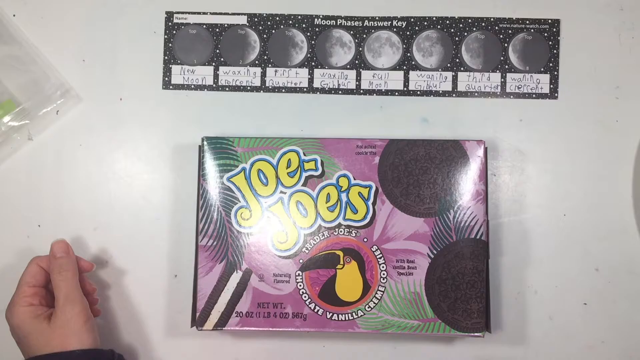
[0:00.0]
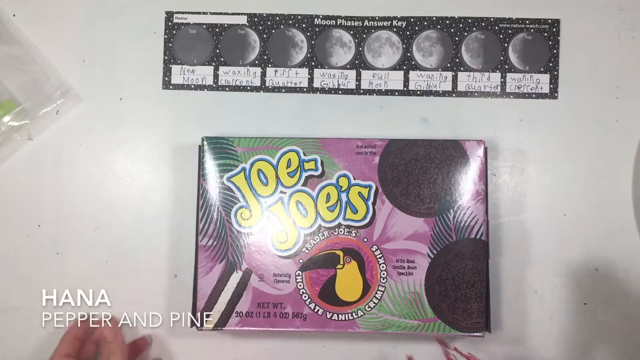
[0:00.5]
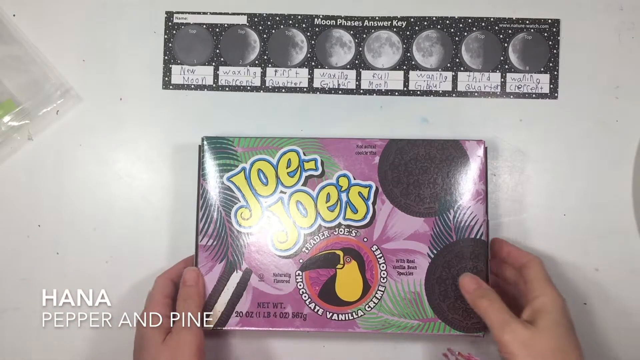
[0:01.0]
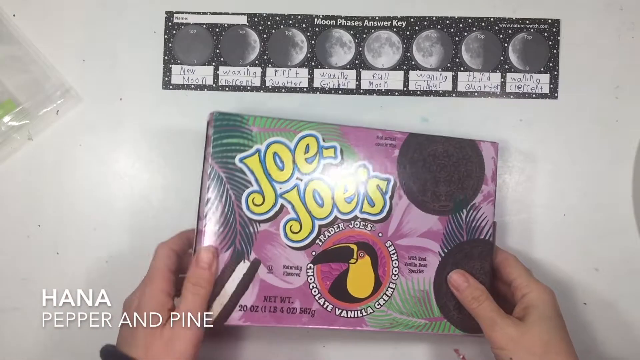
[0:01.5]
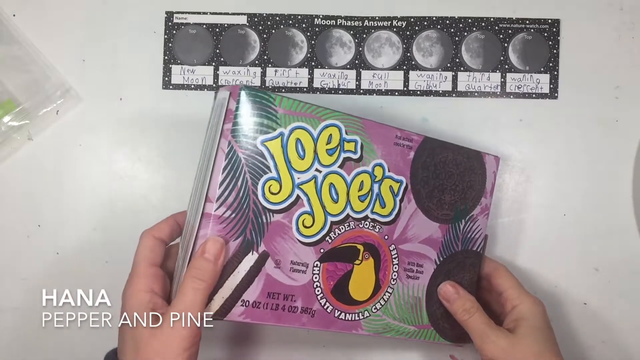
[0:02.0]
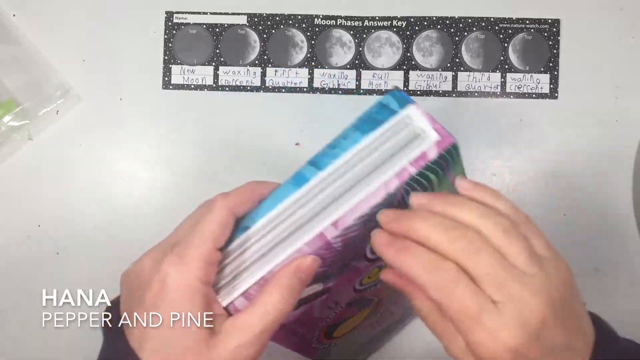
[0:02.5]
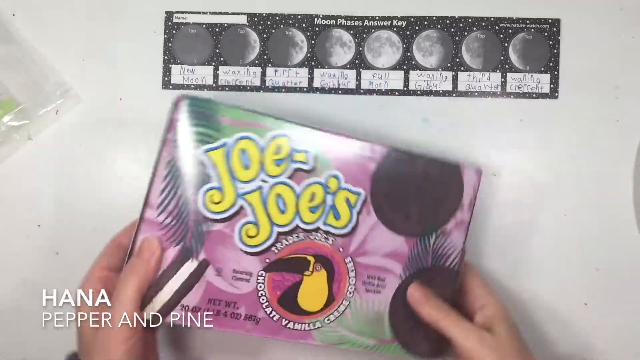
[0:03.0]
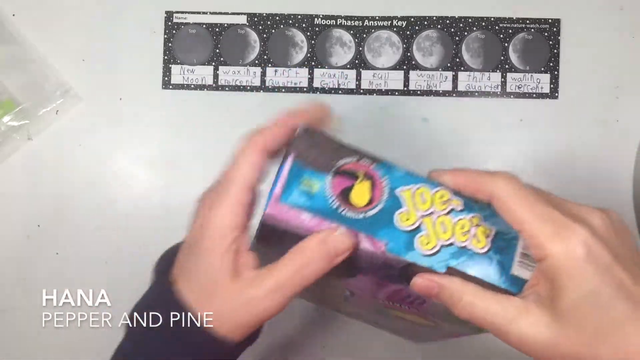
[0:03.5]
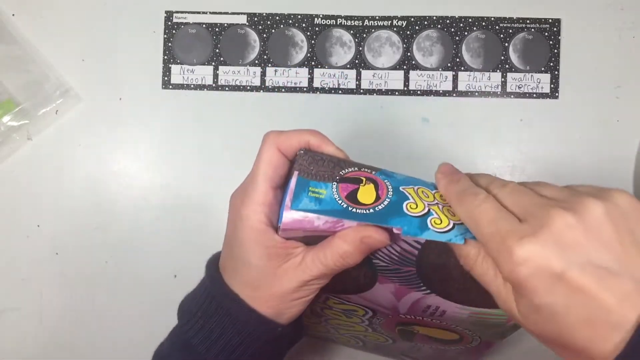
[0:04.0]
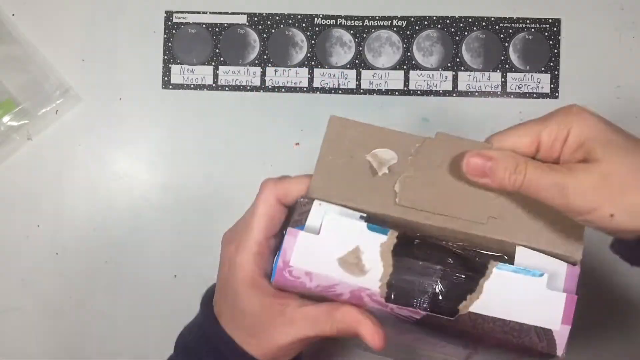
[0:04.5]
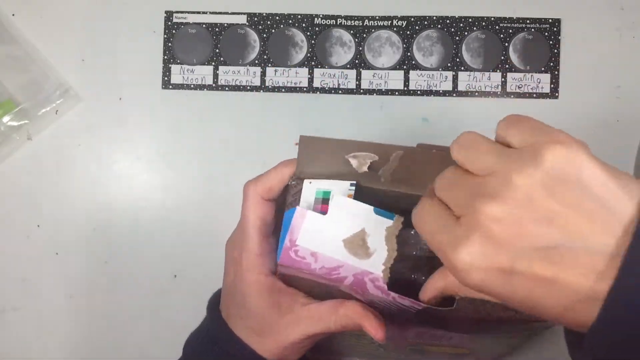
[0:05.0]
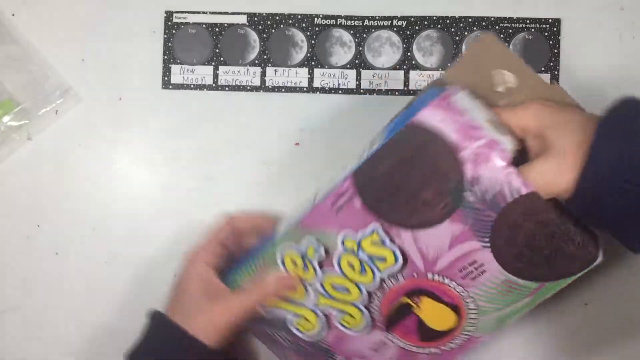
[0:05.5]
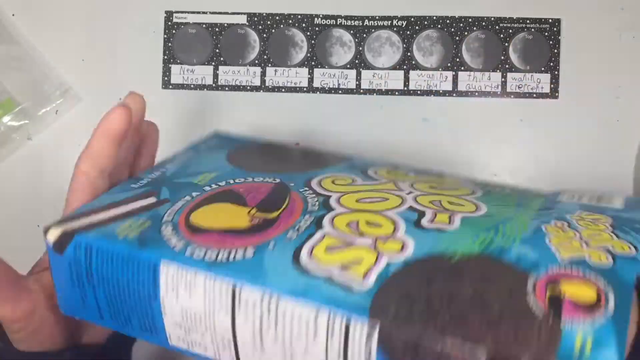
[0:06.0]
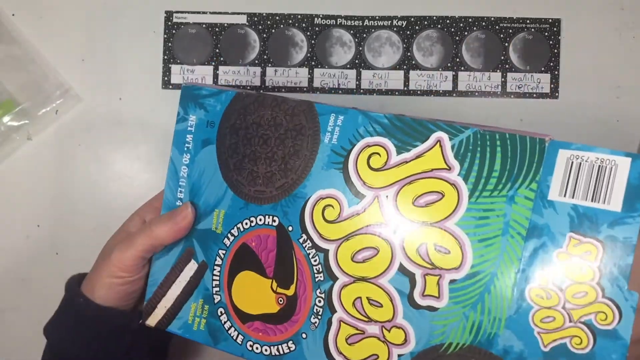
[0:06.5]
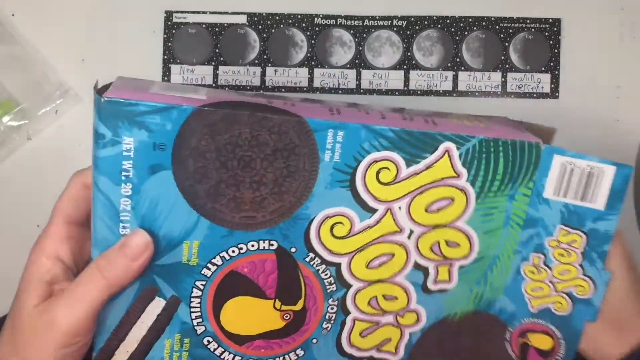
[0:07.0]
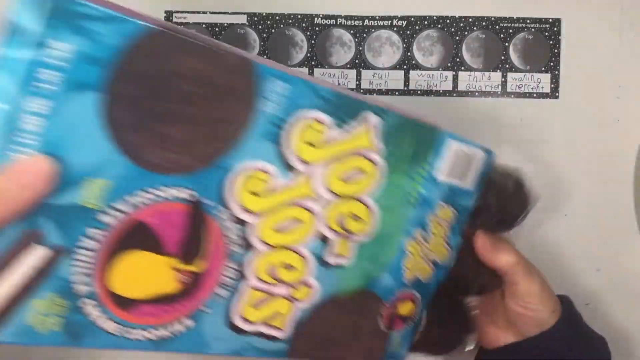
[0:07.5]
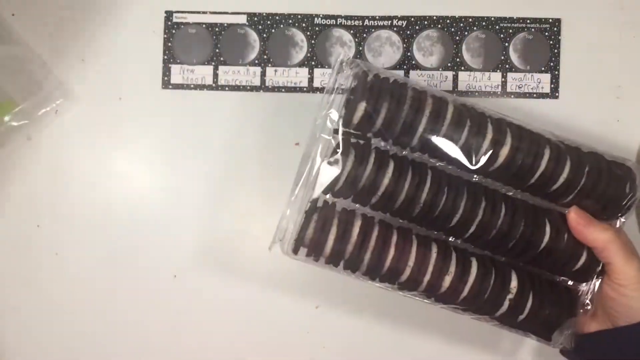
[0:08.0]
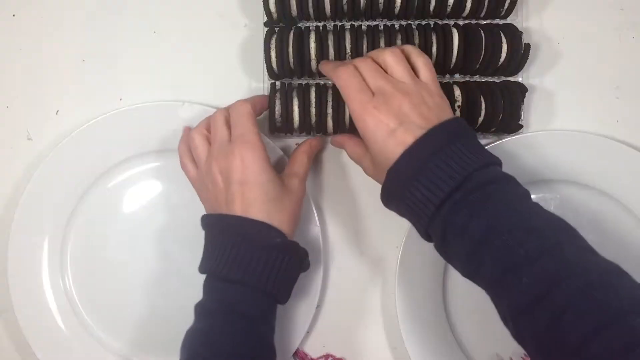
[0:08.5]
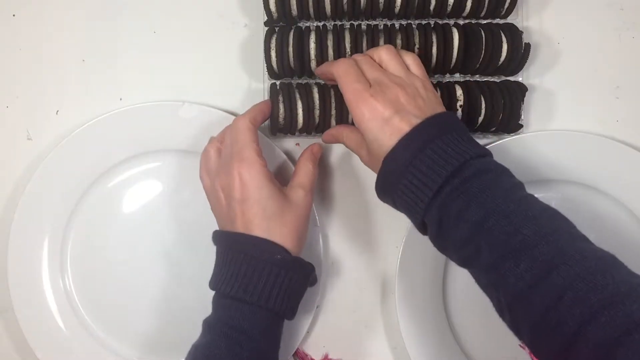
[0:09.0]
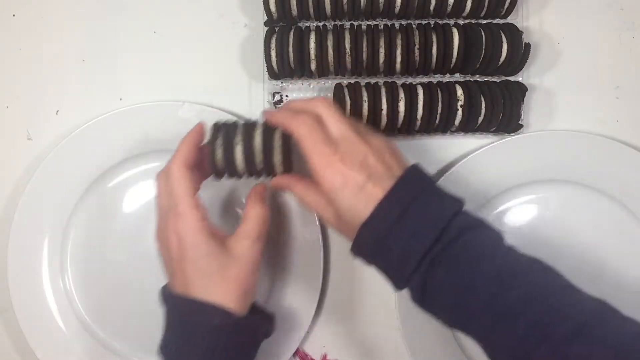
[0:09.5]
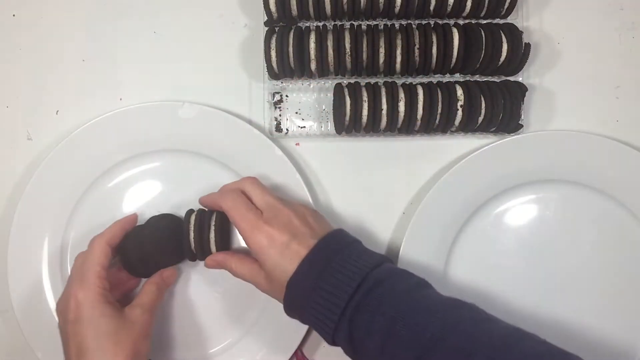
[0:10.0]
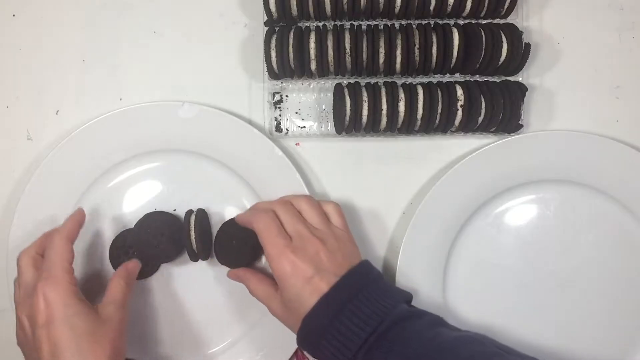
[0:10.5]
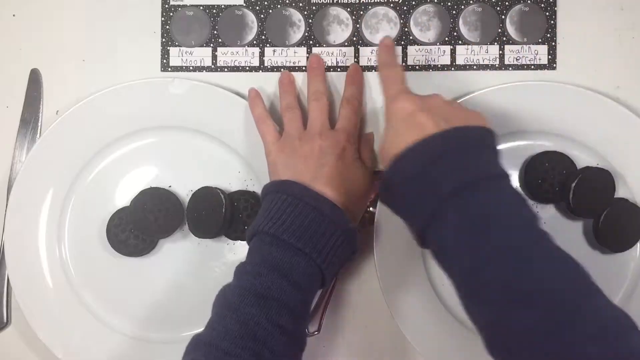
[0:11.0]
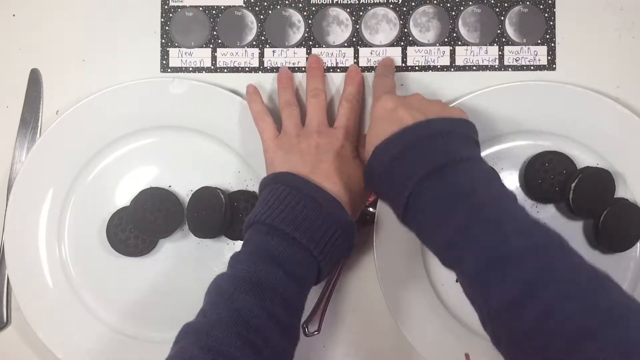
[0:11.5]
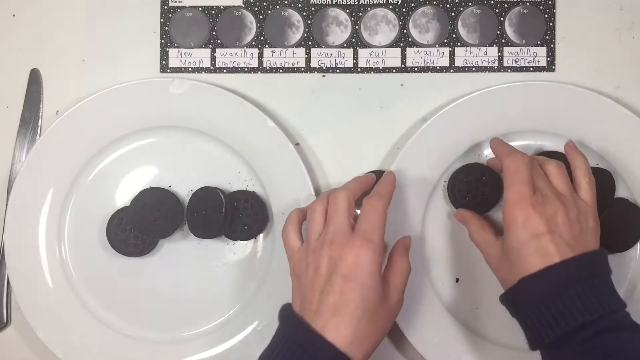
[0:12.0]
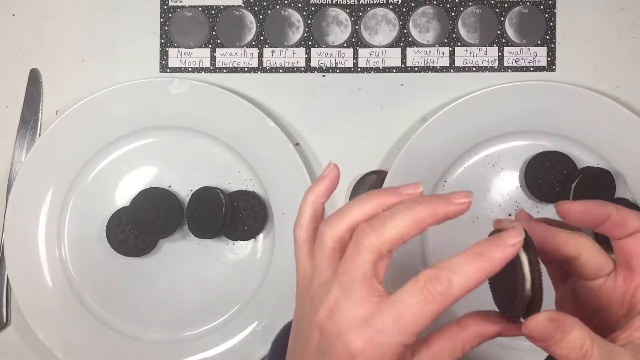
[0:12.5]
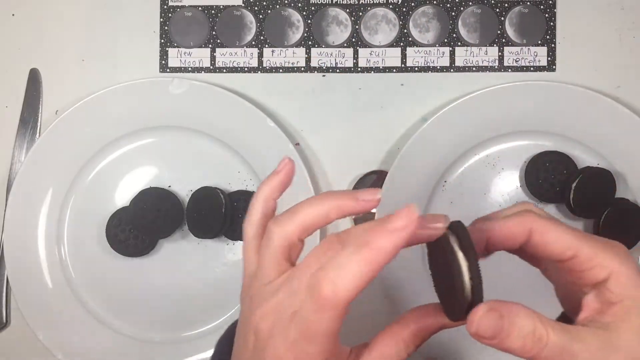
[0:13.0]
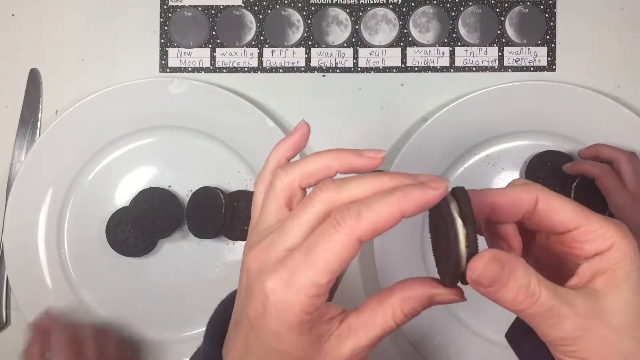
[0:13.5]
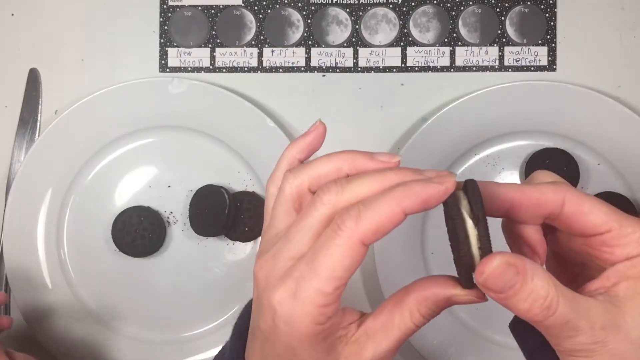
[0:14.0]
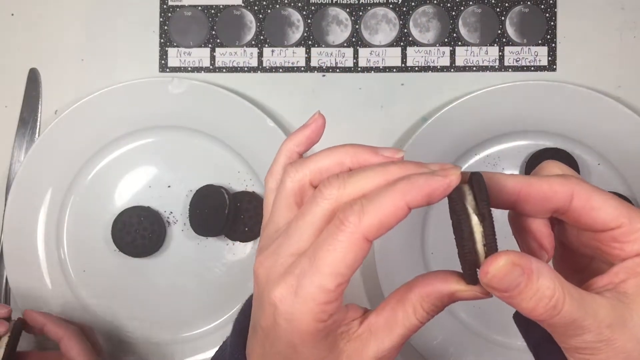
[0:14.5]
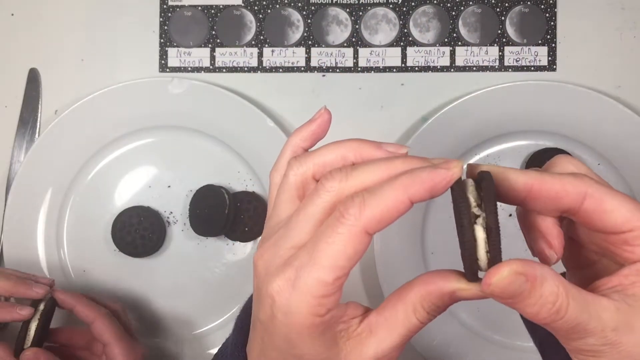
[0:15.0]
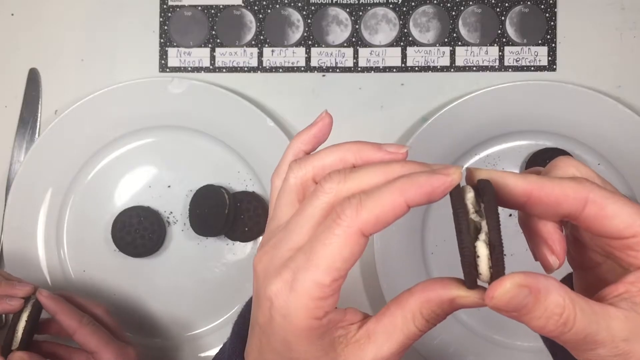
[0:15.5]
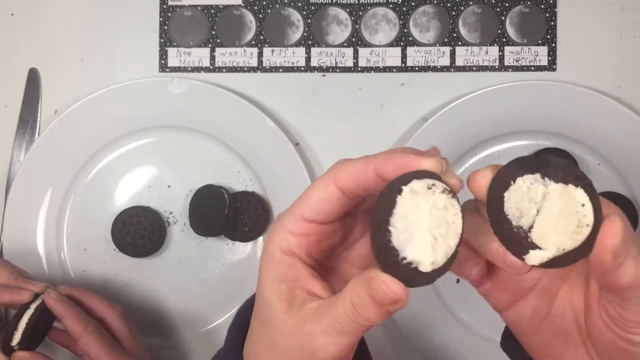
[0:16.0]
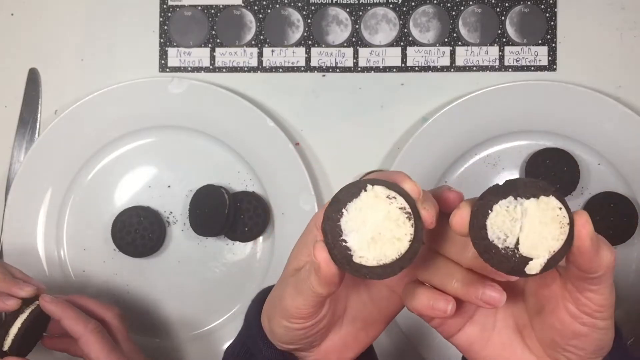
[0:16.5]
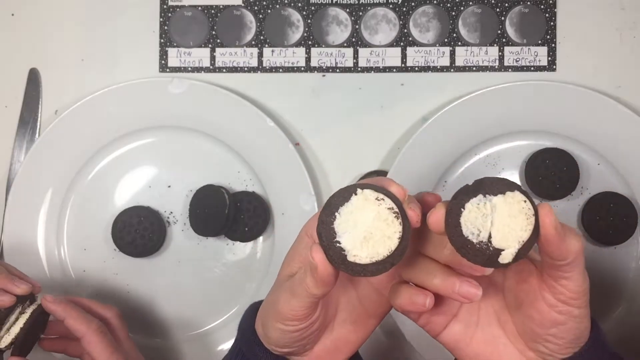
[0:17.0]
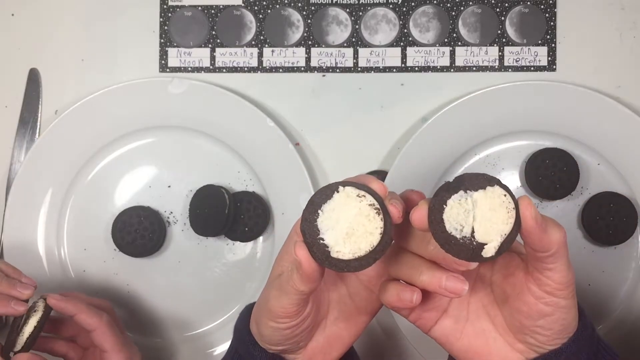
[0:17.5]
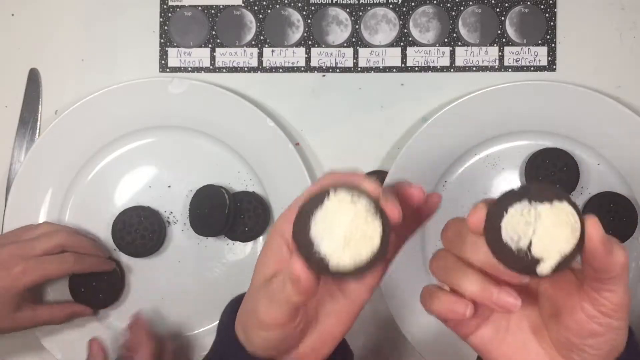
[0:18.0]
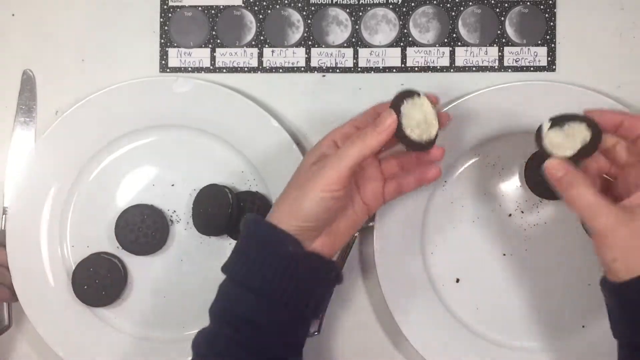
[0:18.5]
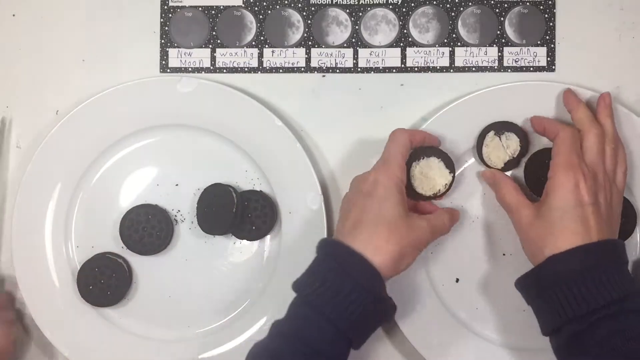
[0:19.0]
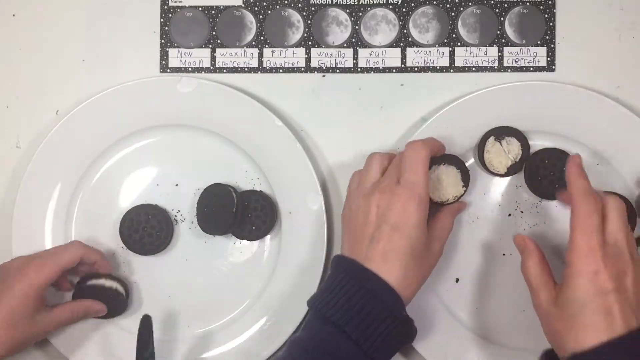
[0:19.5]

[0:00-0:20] A box of cookies appears to be JoJo's from Trader Joe's, labeled as chocolate vanilla cream cookies. The front of the box has a picture of a bird that looks to be a toucan, and the box has a kind of tropical design with palm leaves and a purple background. Above the box is what looks to be a chart of the phases of the moon, including the new moon, waxing, crescent, first quarter, full moon and waning; the writing is not very legible. A set of hands comes into view, opens the box and pulls out the cookies, which are in three rows. They look to be chocolate sandwich cookies, somewhat like Oreos, in a Trader Joe's version. More hands join in, opening the cookies and laying them across two plates placed side by side on a white tabletop or countertop.